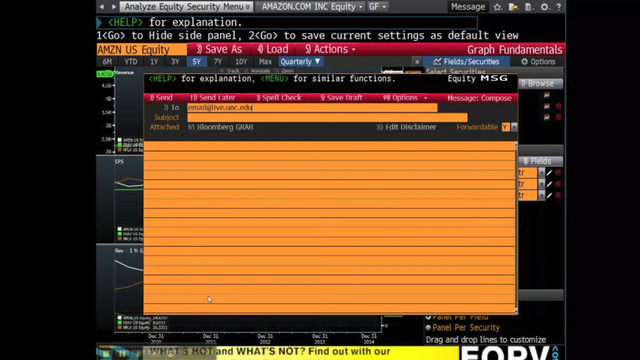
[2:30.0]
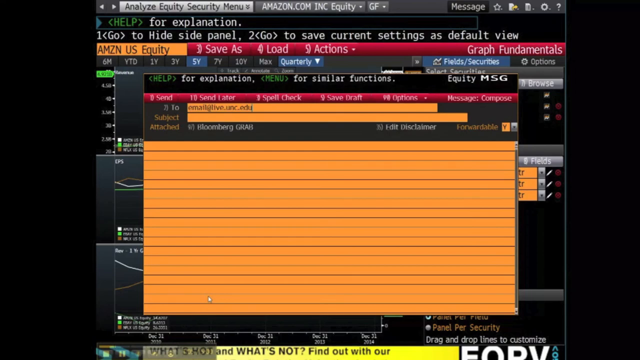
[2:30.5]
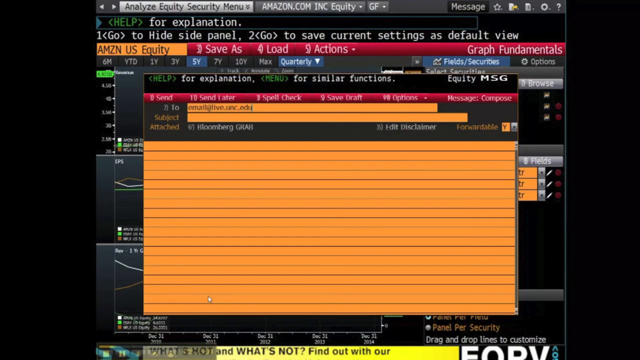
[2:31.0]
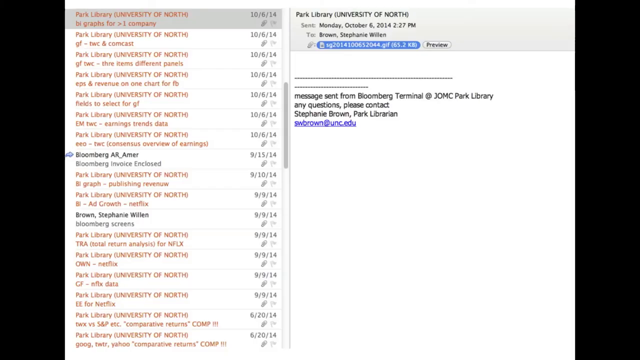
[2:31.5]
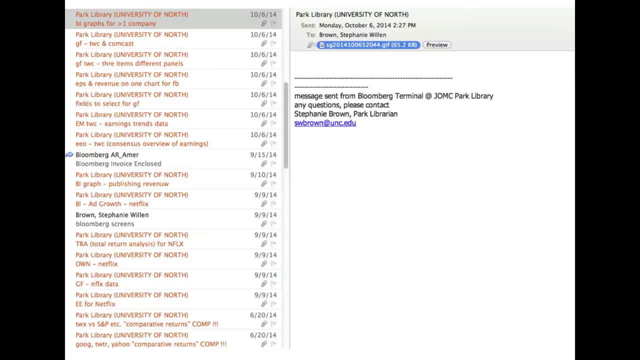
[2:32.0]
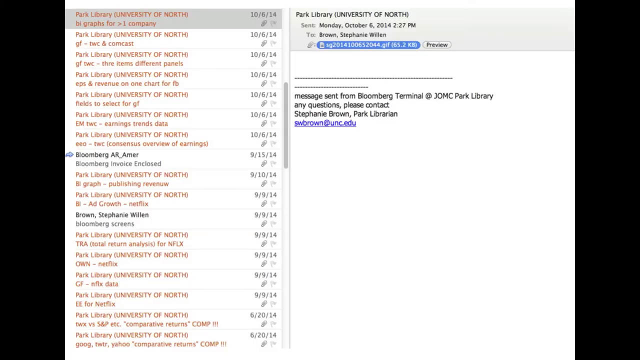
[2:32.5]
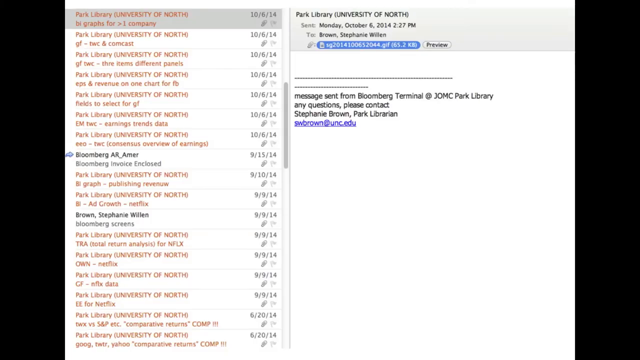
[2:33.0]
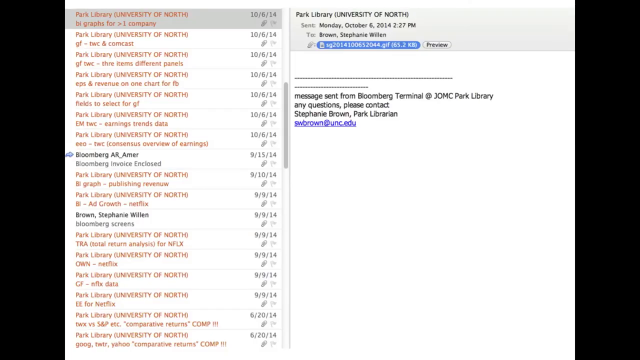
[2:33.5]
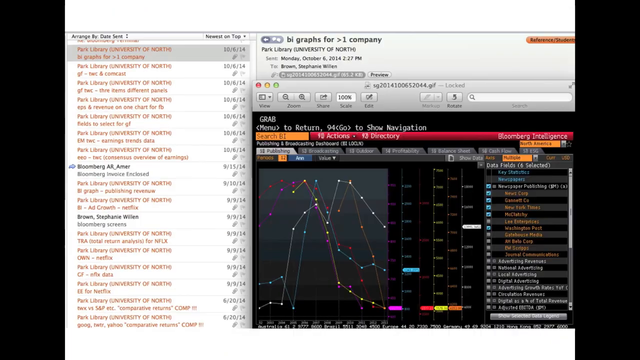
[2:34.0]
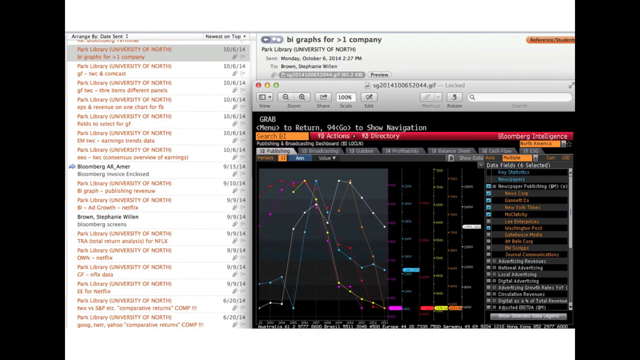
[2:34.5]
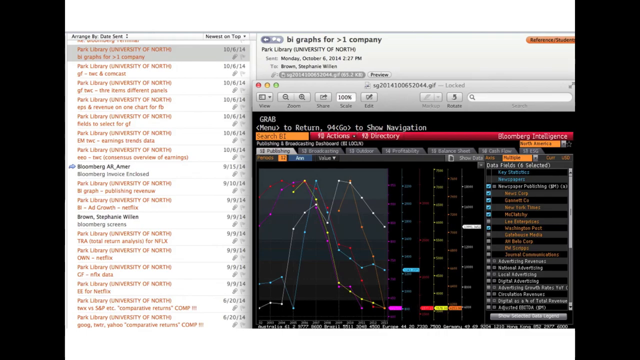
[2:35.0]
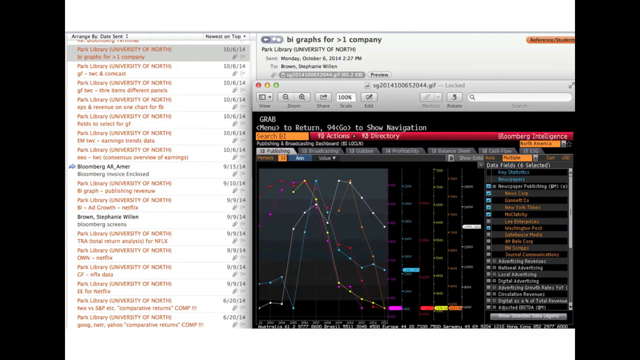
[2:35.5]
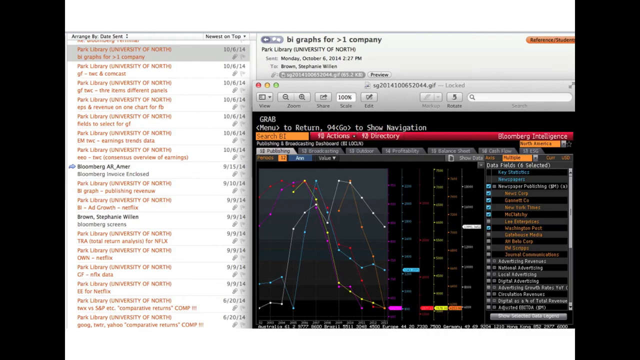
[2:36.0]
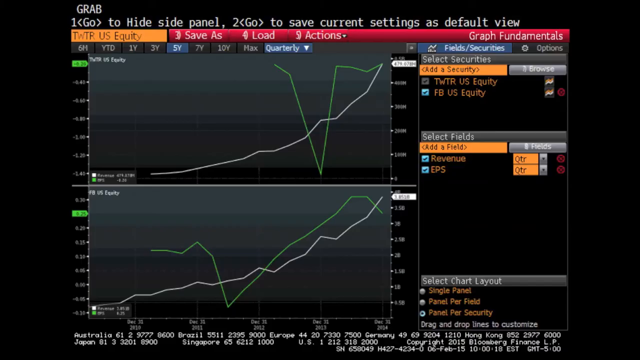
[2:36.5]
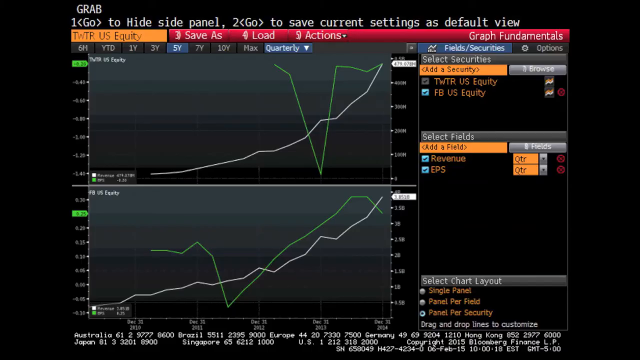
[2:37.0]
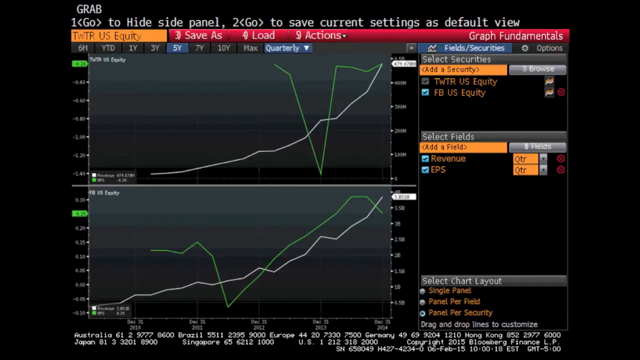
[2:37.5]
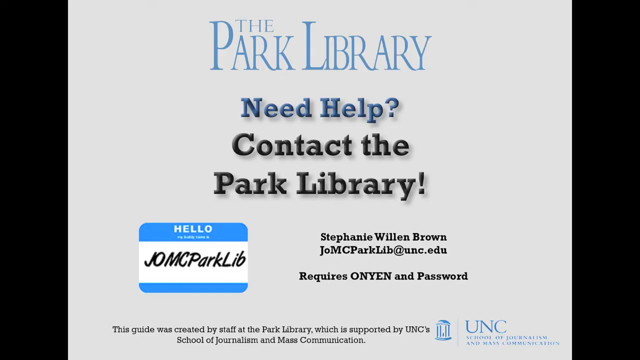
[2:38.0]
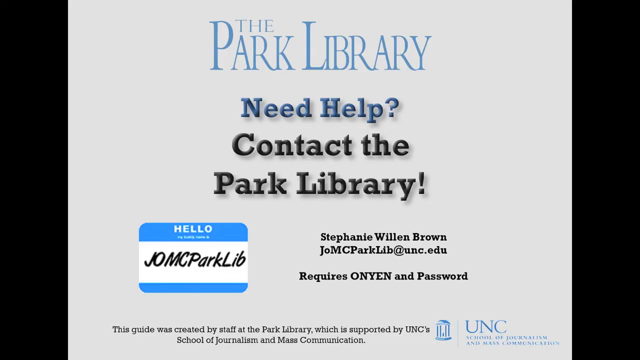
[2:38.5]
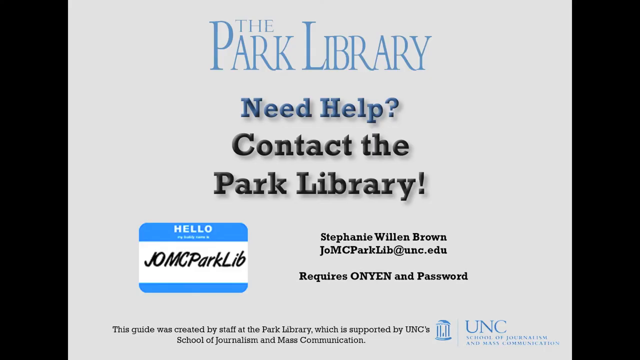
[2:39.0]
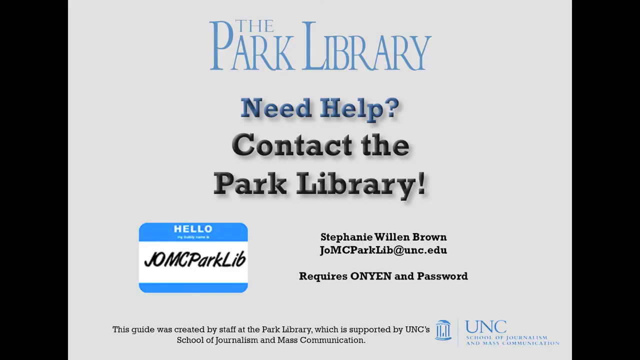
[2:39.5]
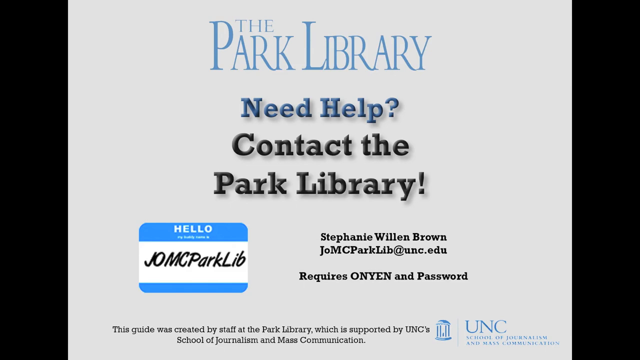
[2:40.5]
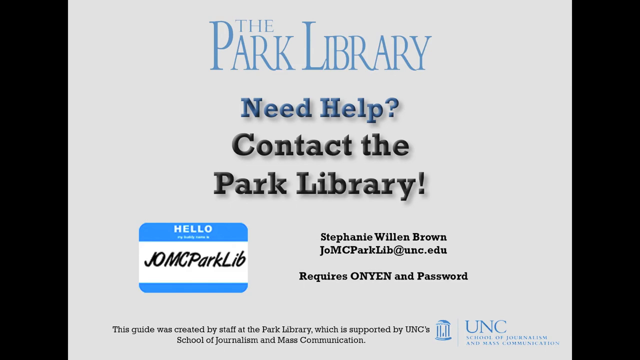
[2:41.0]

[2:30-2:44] A screengrab of the software is sent in an email, and then the software is shown for a few seconds, with equities, revenues and EPS. At the very end, a screen says "need help? Contact the Park library". It gives someone called Stephanie Willenbaum, who probably works at the Park Library, as a contact to email for help with the software. It also states that this guide was created by staff at the Park Library and is supported by the UNC School of Journalism and Mass Communications.